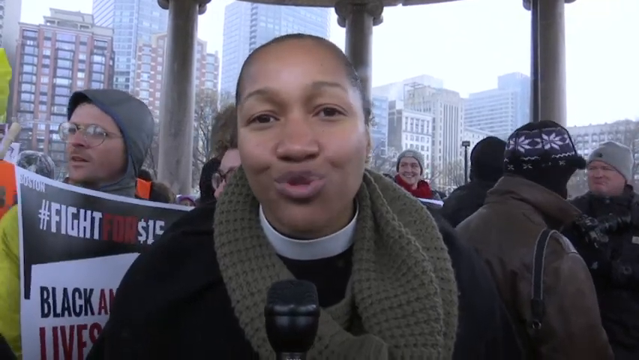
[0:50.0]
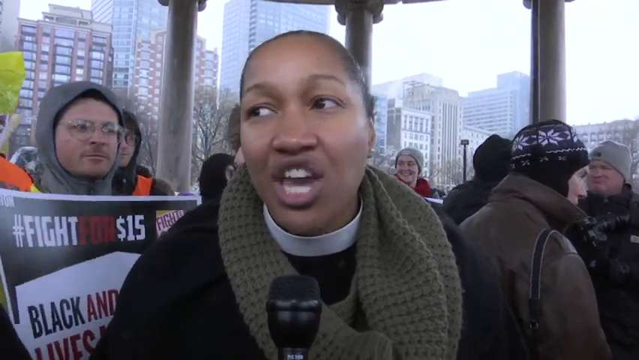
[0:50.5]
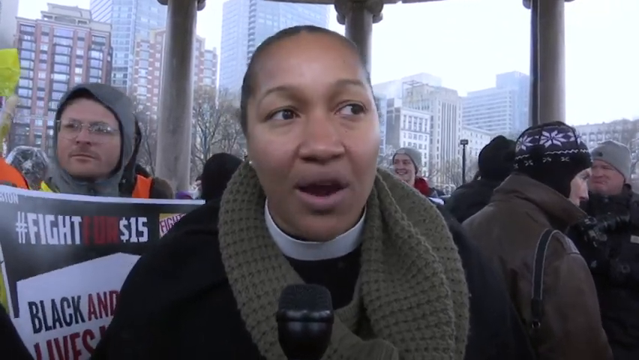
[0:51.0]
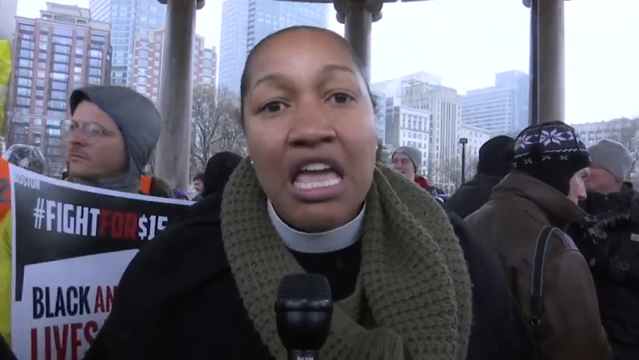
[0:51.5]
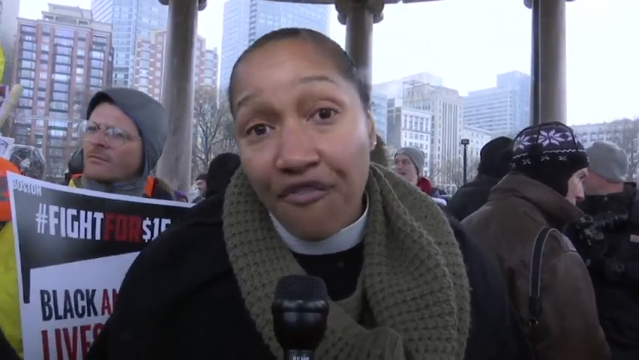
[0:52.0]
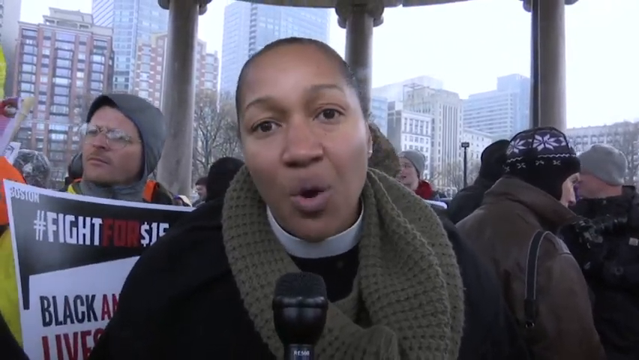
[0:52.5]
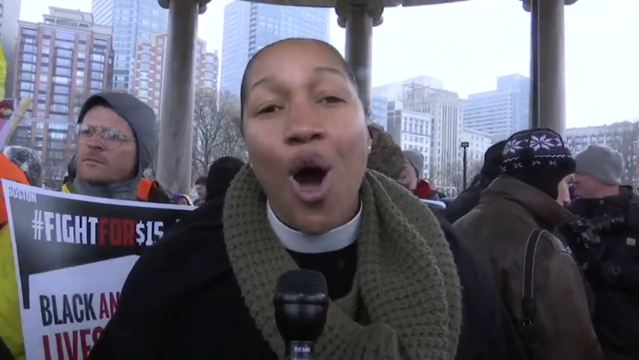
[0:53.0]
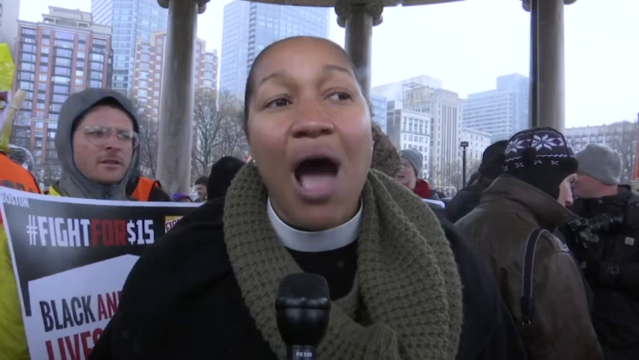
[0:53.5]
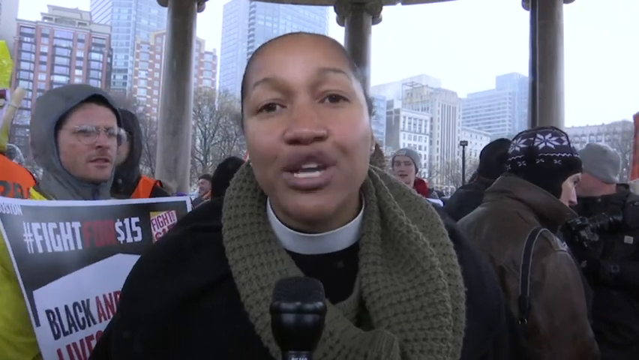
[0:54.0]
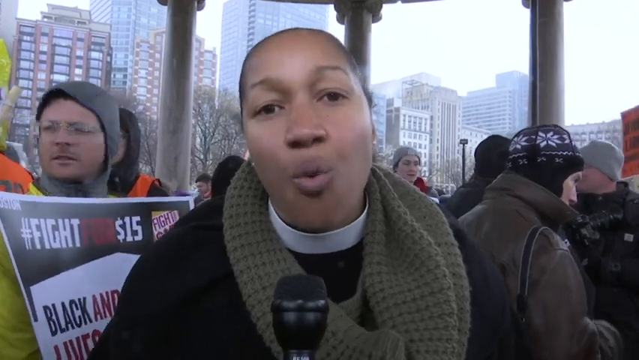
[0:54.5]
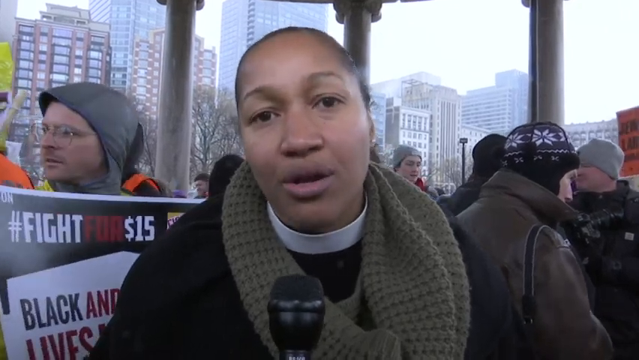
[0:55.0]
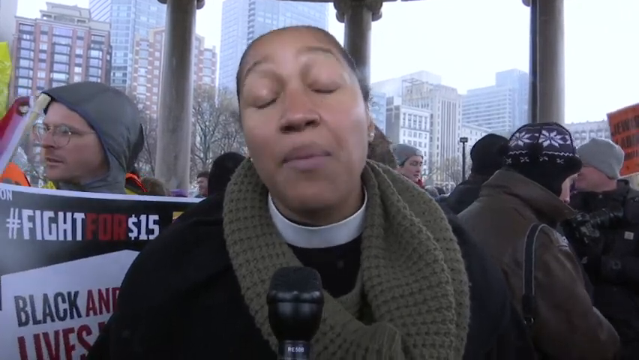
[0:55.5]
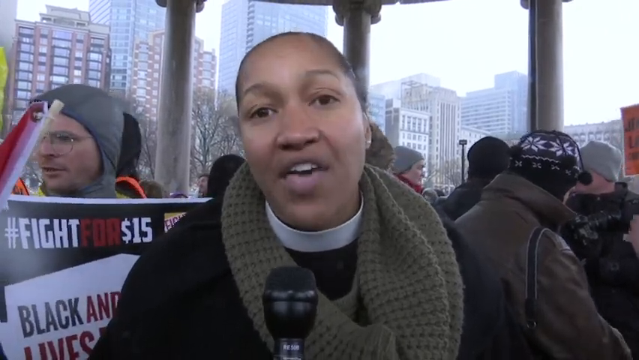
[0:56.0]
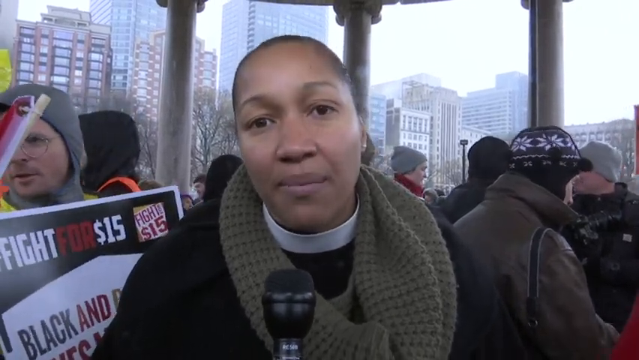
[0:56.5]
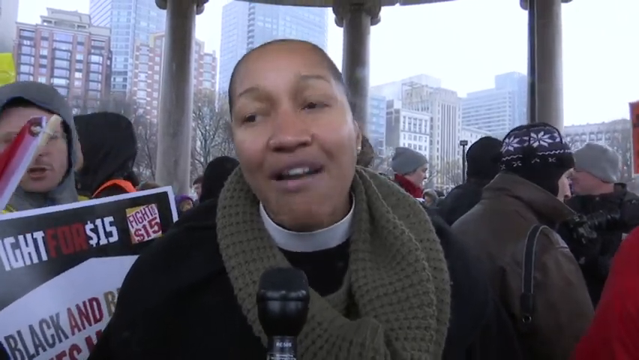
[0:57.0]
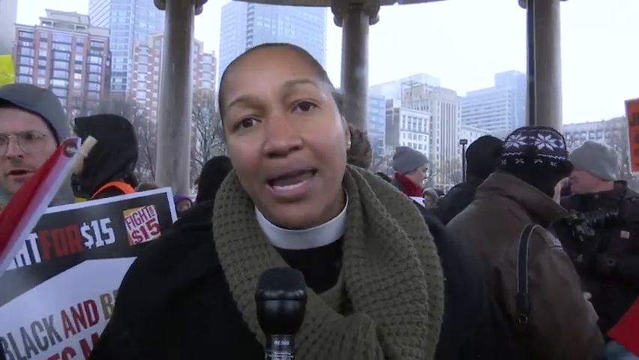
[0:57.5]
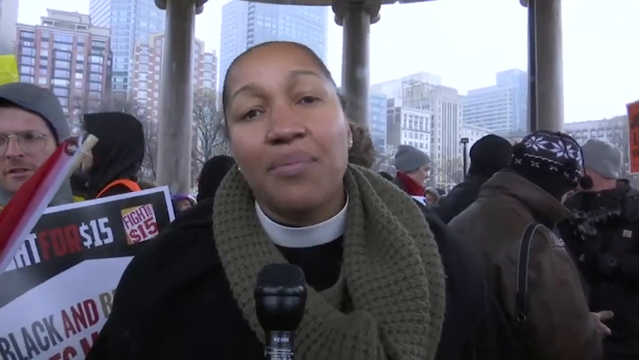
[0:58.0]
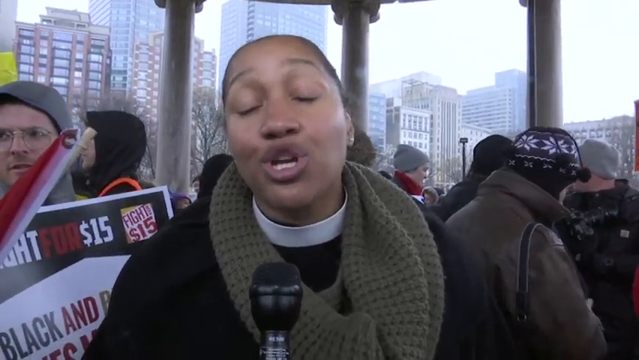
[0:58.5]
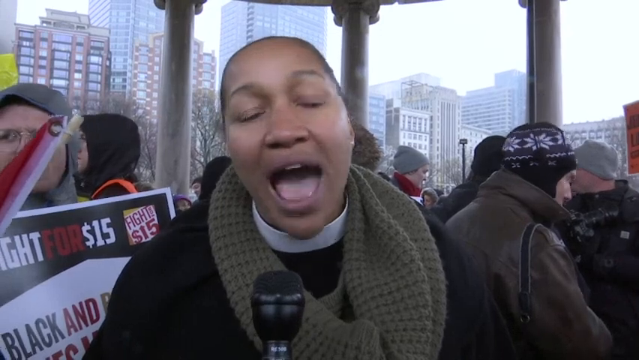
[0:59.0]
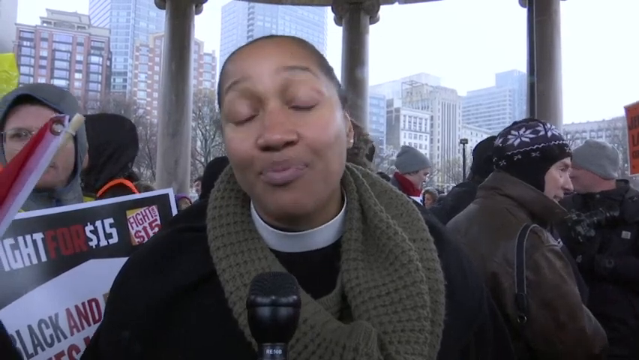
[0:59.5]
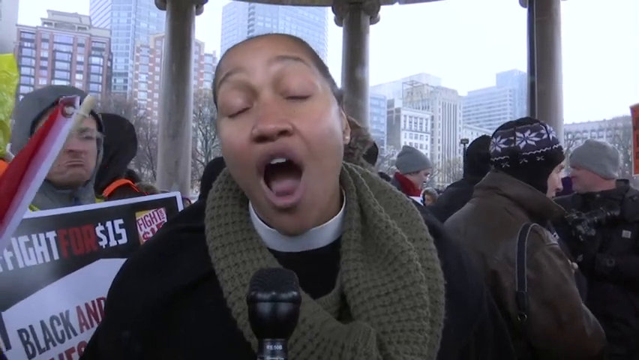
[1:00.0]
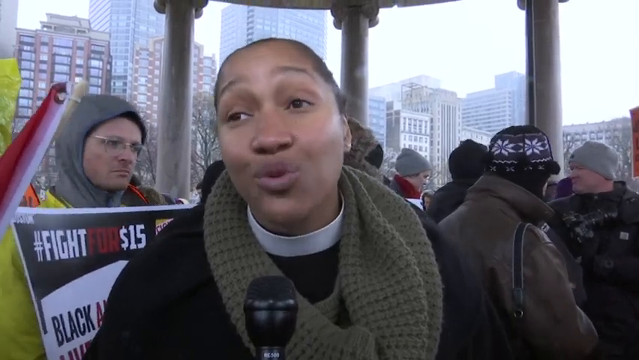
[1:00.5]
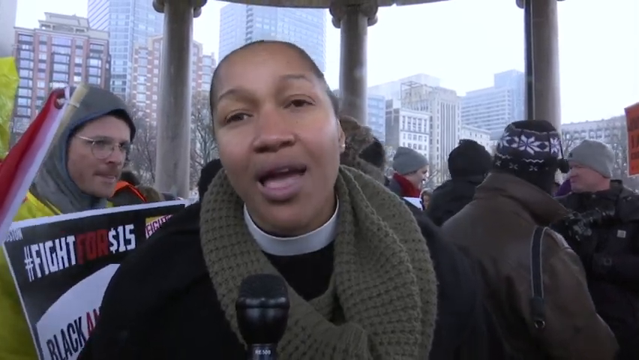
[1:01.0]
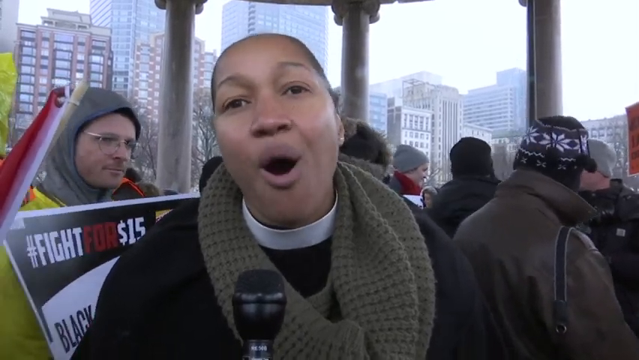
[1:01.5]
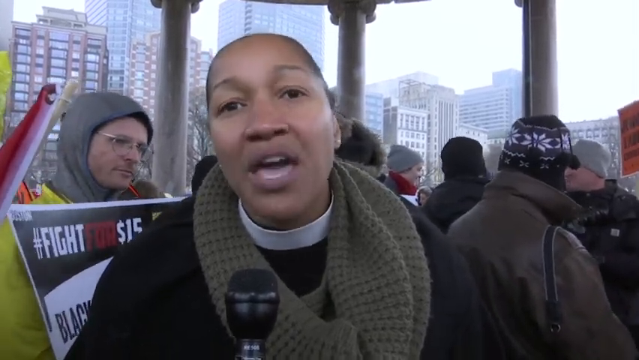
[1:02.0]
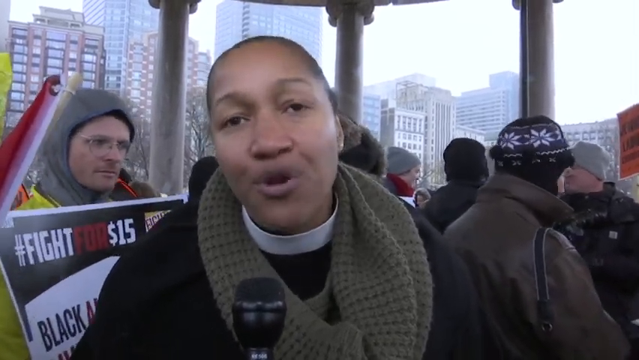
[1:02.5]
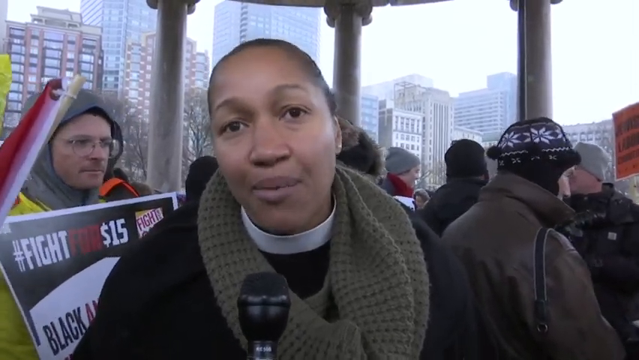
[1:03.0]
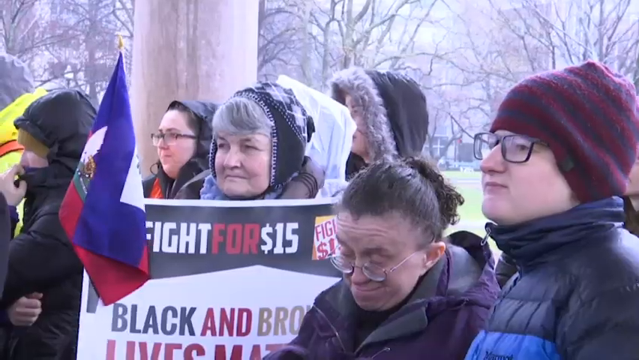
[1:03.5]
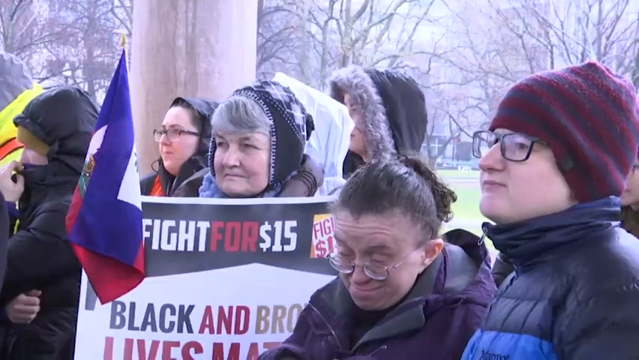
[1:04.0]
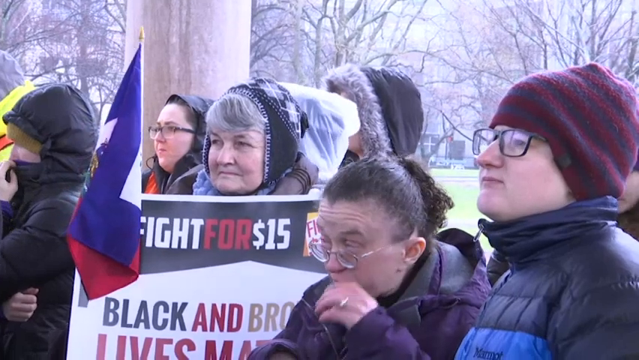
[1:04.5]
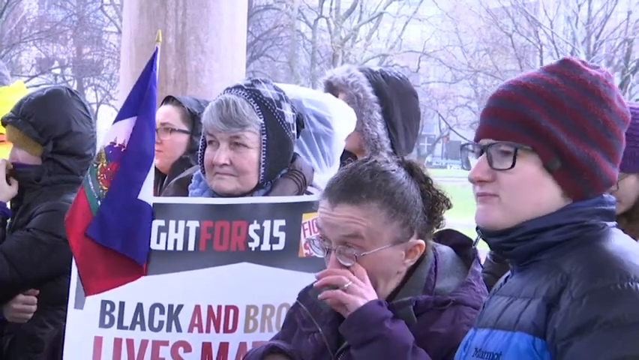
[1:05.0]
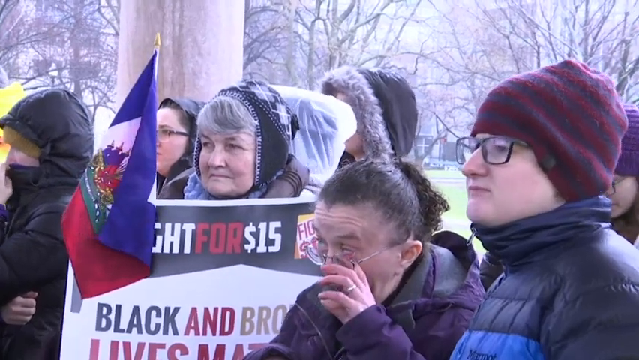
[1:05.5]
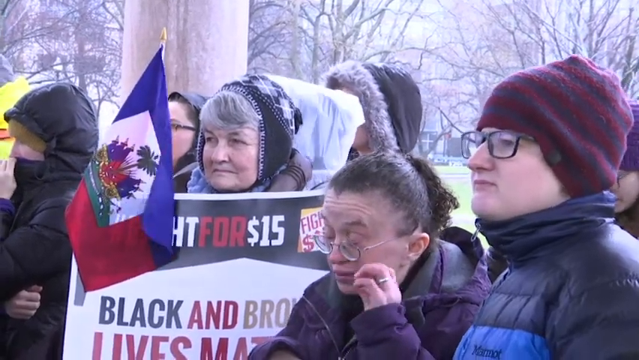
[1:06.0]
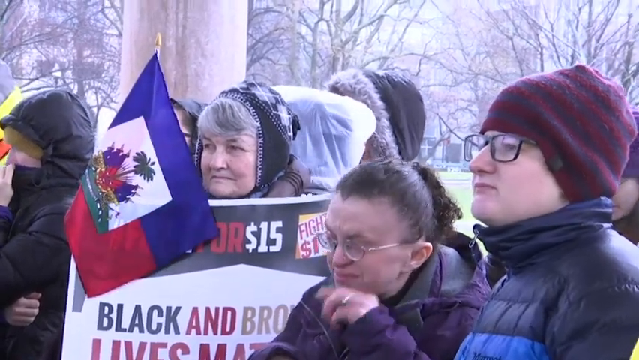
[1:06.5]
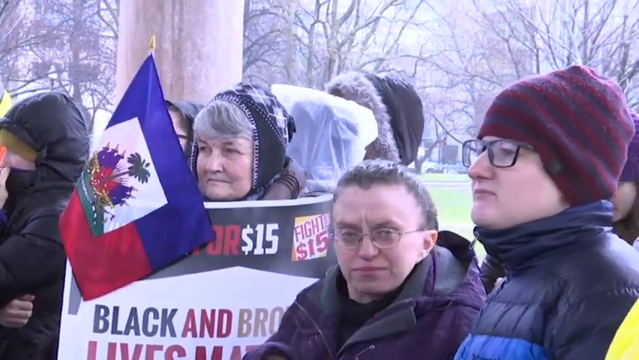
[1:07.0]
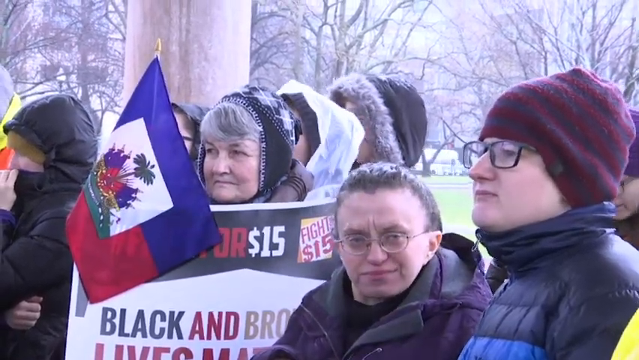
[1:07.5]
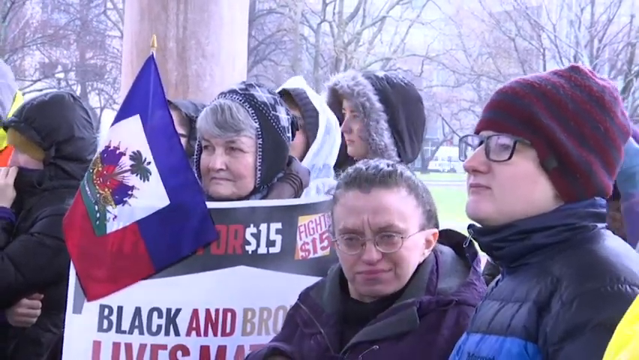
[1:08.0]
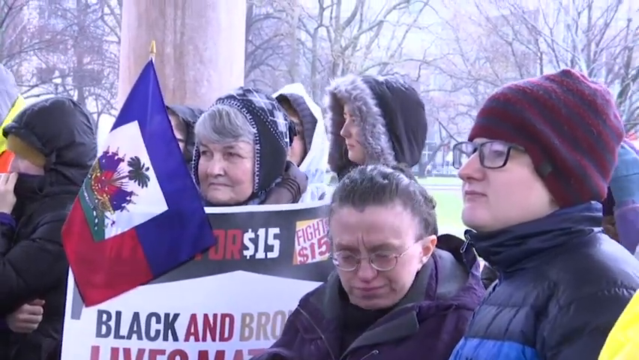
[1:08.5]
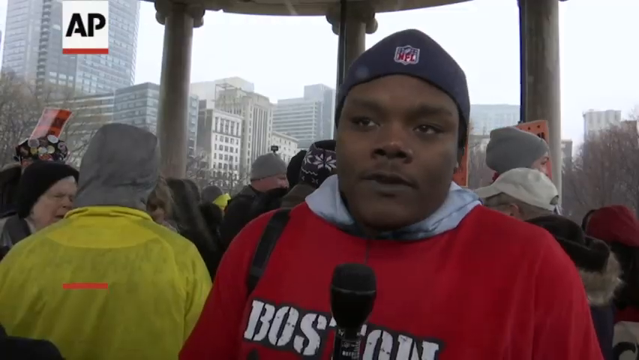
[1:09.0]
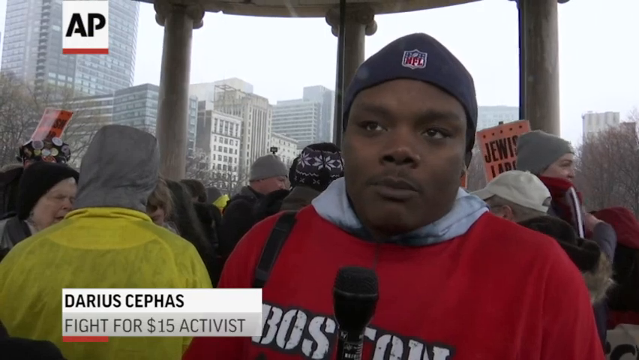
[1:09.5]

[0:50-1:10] At the protest for fair wages, "#fight for 15" is visible, along with a sign reading "black and brown lives matter". The reverend, a civil rights activist, speaks to a news reporter, wearing a brown scarf, her black uniform and white collar. People stand behind her, bundled up in heavy winter attire, coats and jackets, and they also have umbrellas. After the rain, they are gathered under a covered area with their flags, banners and signs. Darius Cephas is also interviewed, and then the video cuts back to the reverend speaking. She is very heated and looks fed up. Many people are angry as they protest for fair wages, gathered underneath the building waiting for the rain to stop.